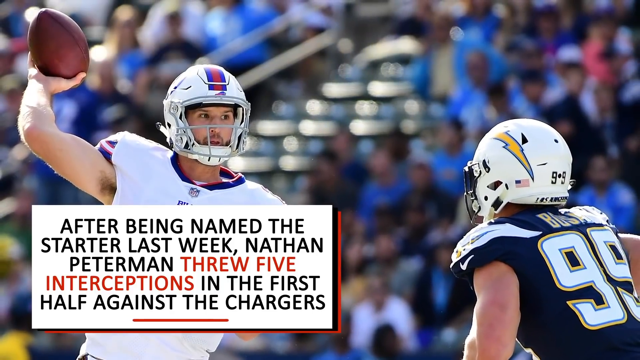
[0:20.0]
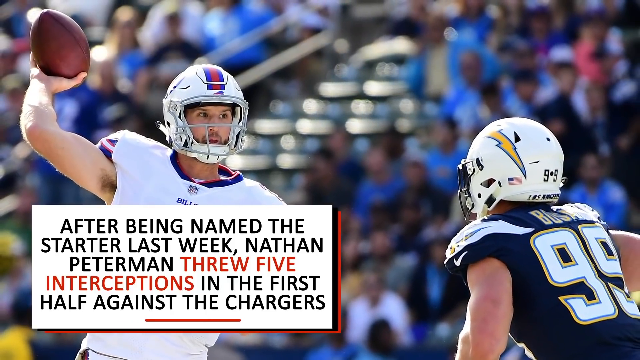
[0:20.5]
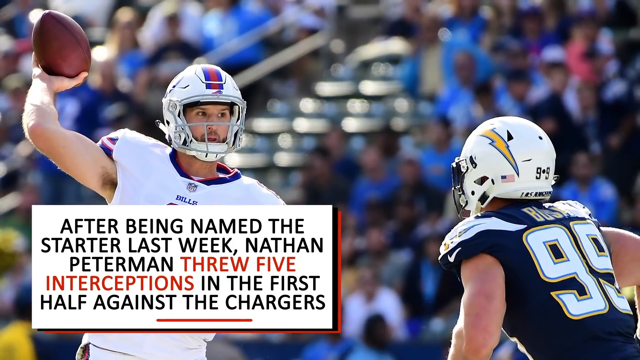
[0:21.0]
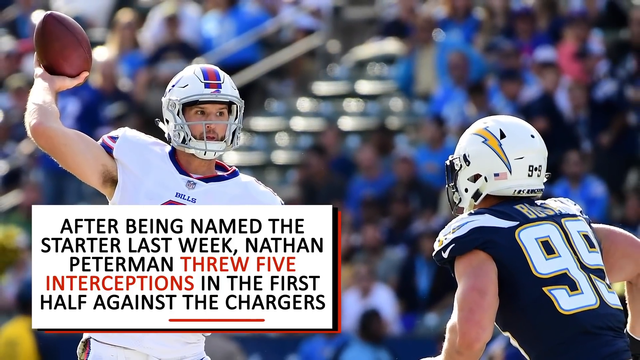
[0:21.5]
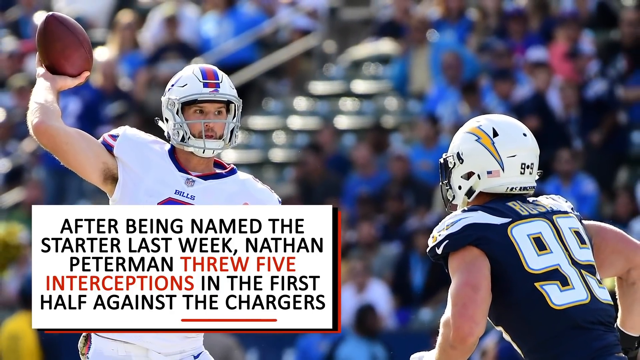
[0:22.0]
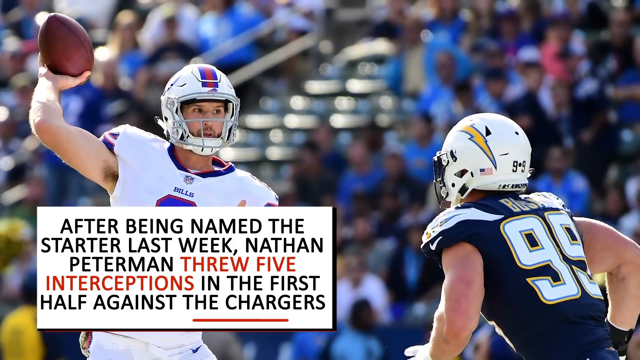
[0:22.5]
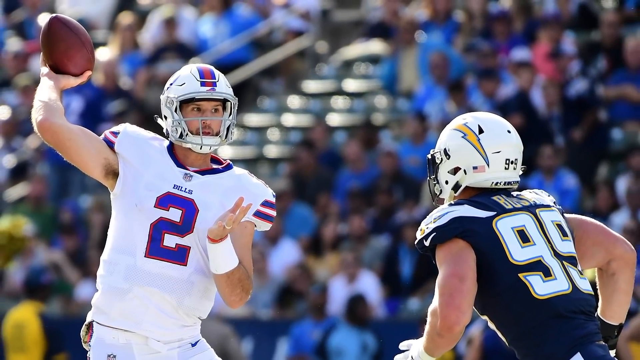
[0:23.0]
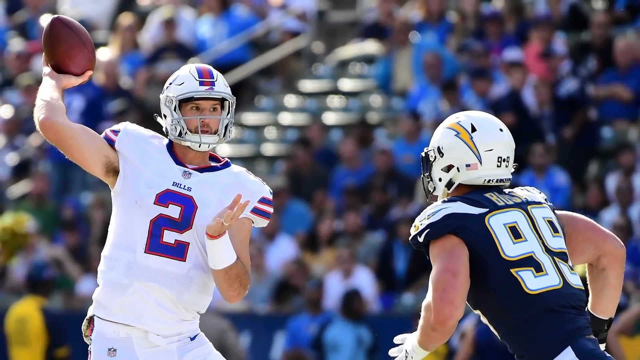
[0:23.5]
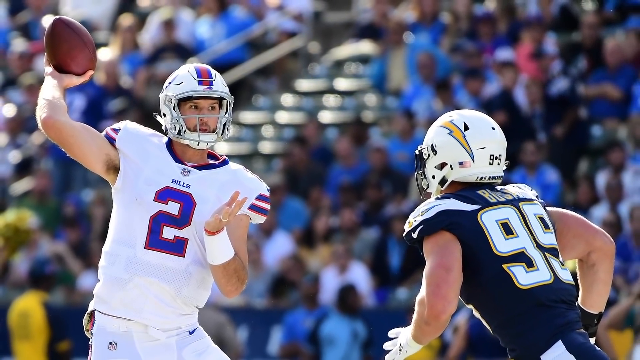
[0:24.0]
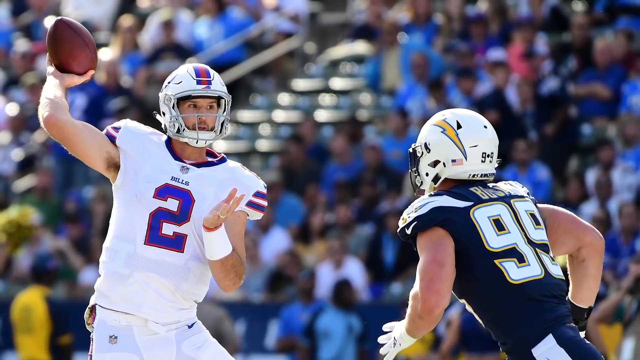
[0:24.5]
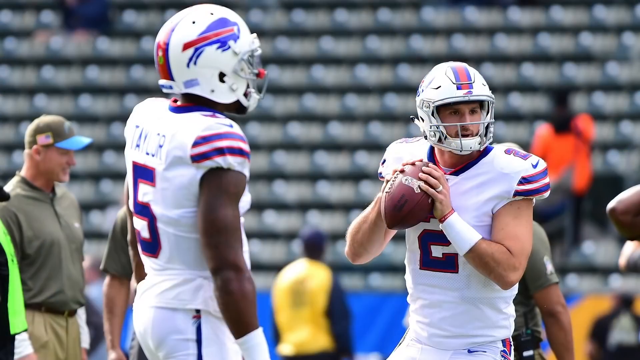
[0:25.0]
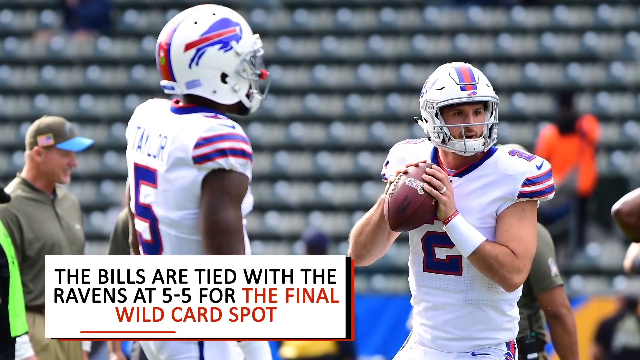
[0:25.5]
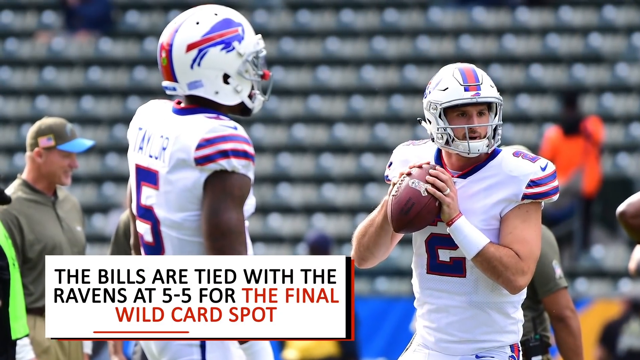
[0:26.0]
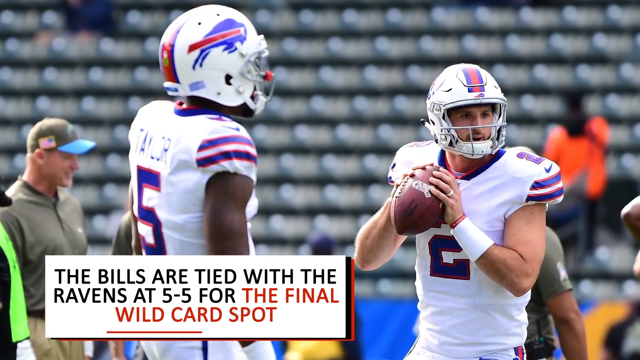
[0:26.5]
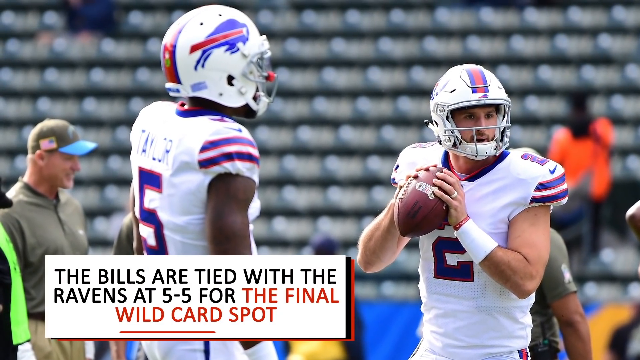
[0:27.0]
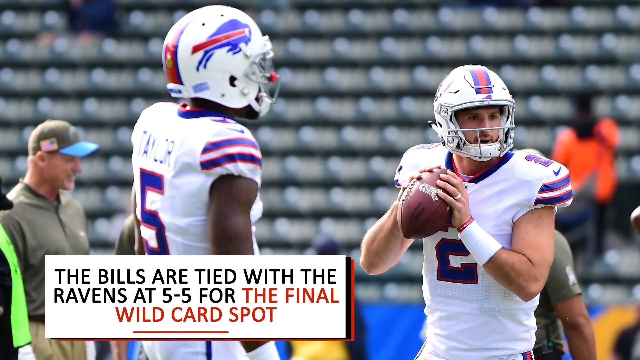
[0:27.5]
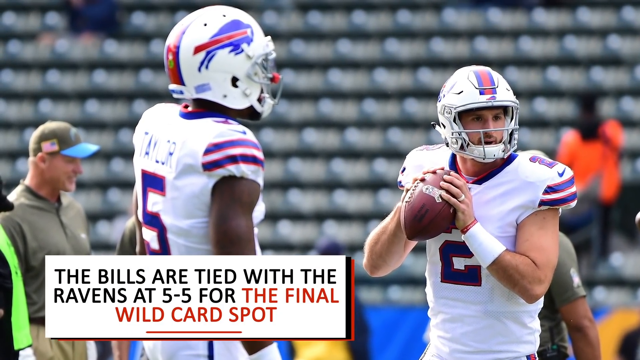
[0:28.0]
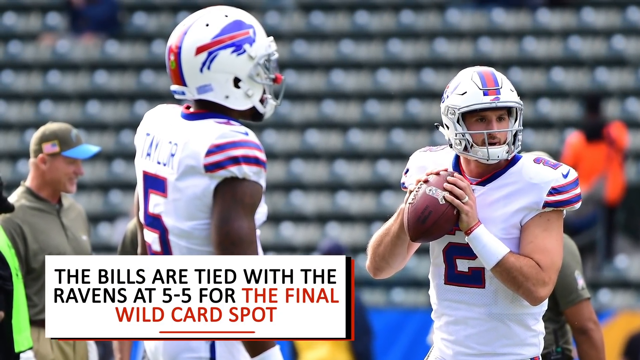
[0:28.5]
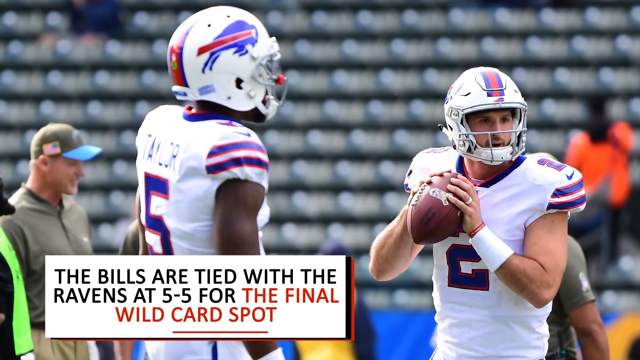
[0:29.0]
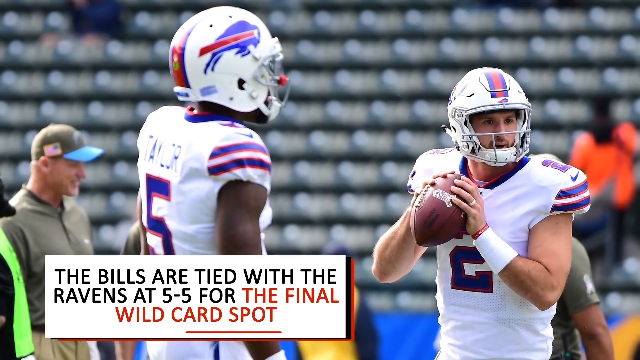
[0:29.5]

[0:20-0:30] A picture shows two football players. The player on the left wears a white uniform and holds up a football. The player on the right wears a navy dark blue uniform with a white helmet and has the number 99 on his back. A message on the bottom left of the screen reads "After being named the starter last week, Nathan Peterman threw five interceptions in the first half against the Chargers." Next is a picture of two football players in white uniforms and white helmets; the player on the right, in a number two uniform, holds a football. On the bottom right, another message reads "The Bills are tied with the Ravens at 5-5 for the final wild card spot."